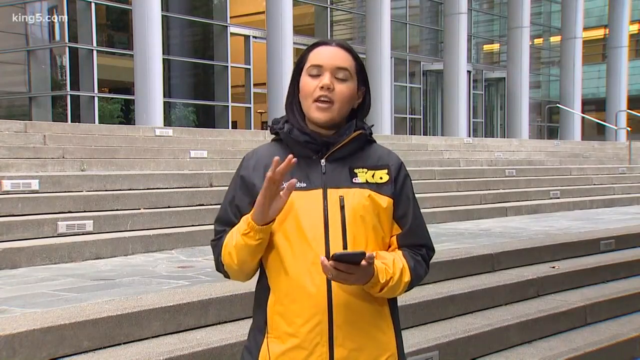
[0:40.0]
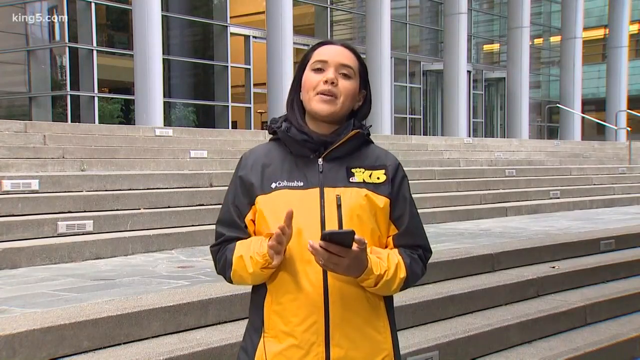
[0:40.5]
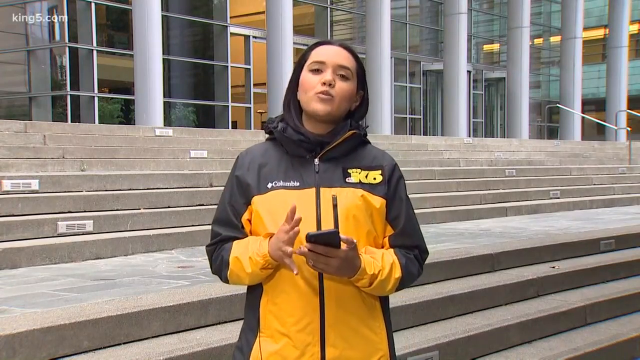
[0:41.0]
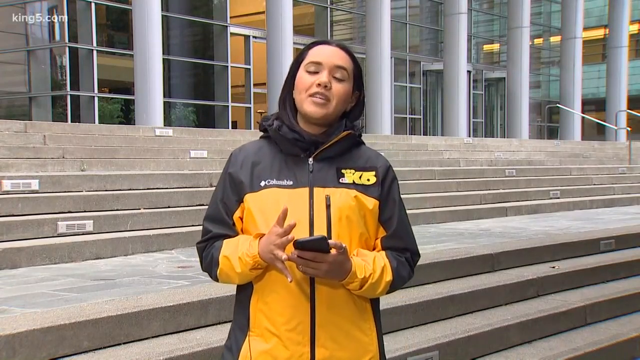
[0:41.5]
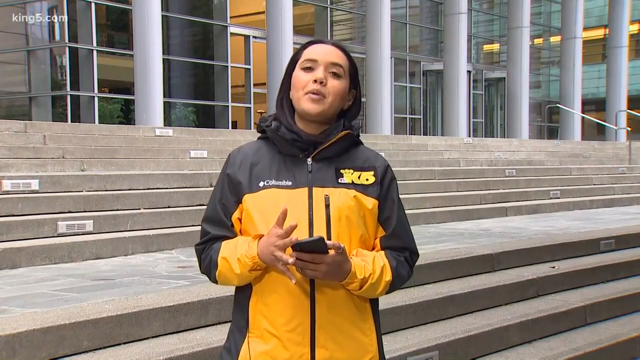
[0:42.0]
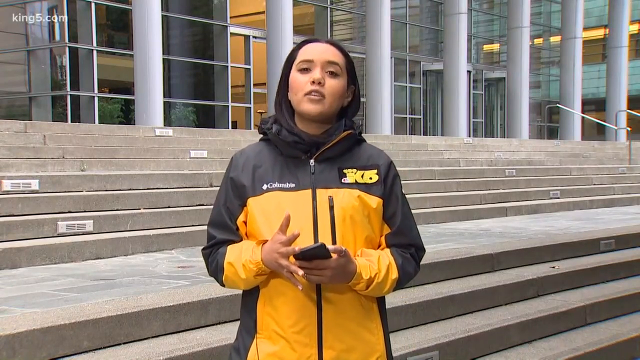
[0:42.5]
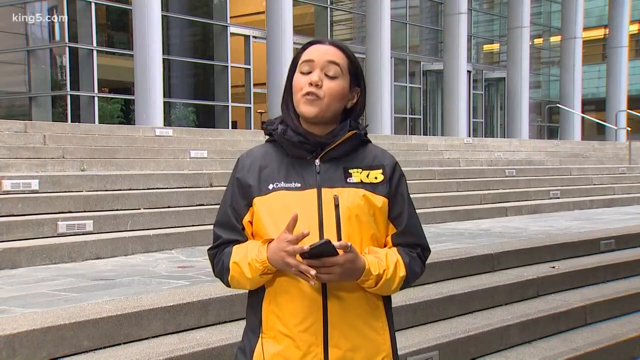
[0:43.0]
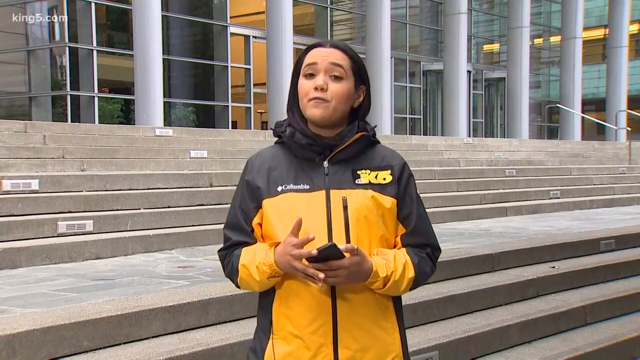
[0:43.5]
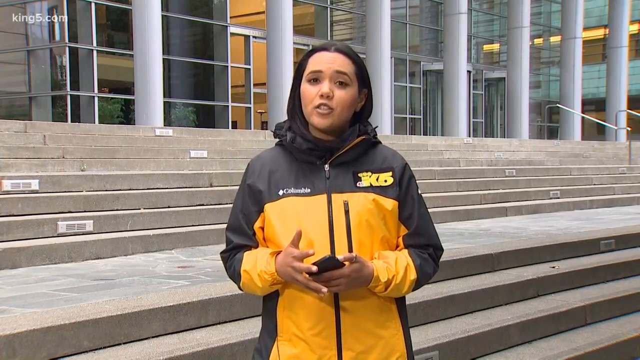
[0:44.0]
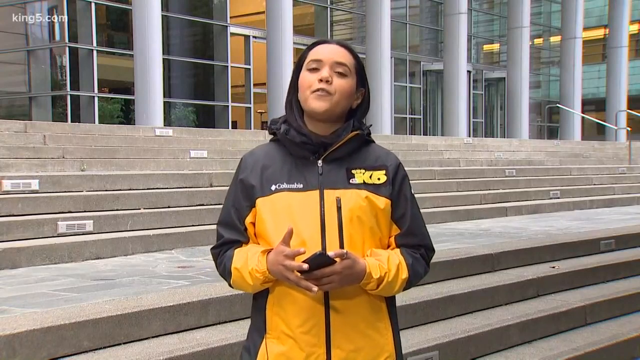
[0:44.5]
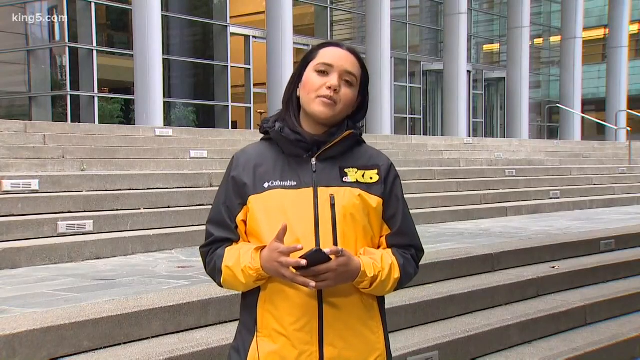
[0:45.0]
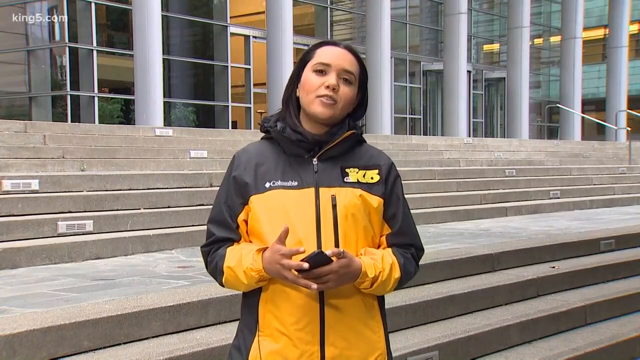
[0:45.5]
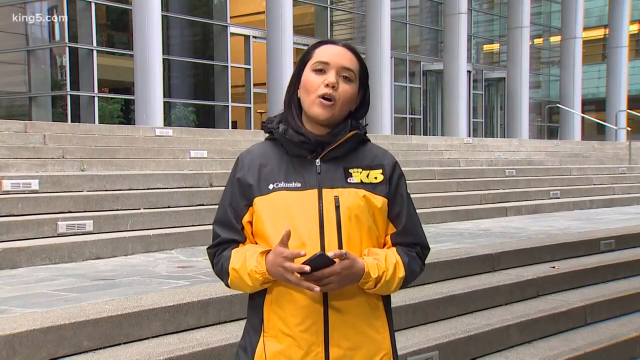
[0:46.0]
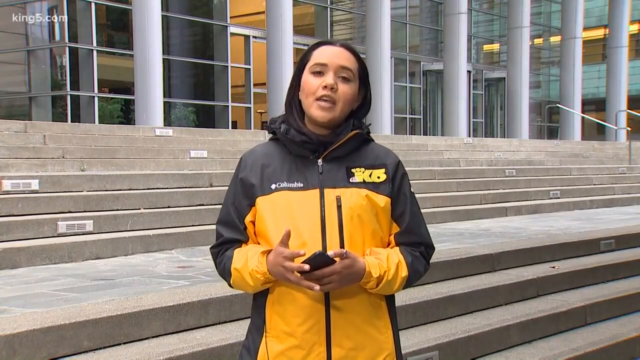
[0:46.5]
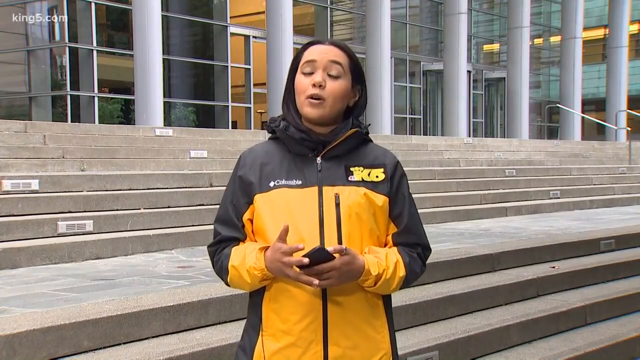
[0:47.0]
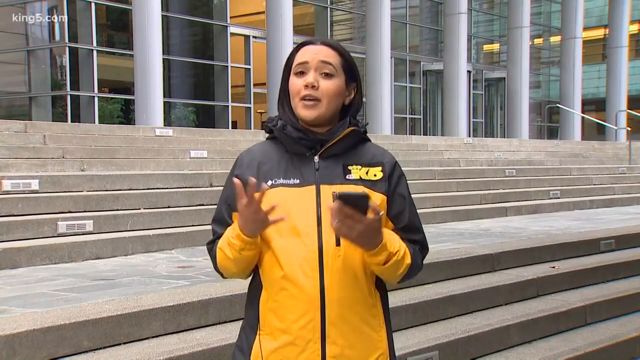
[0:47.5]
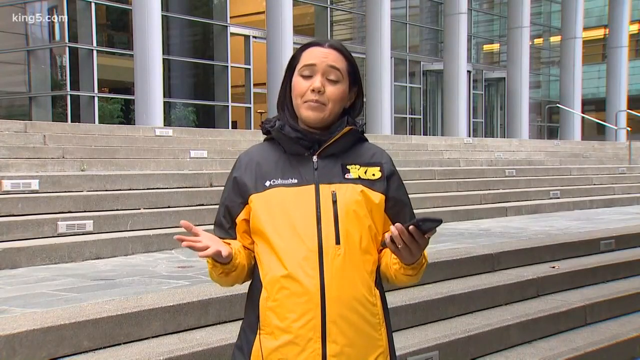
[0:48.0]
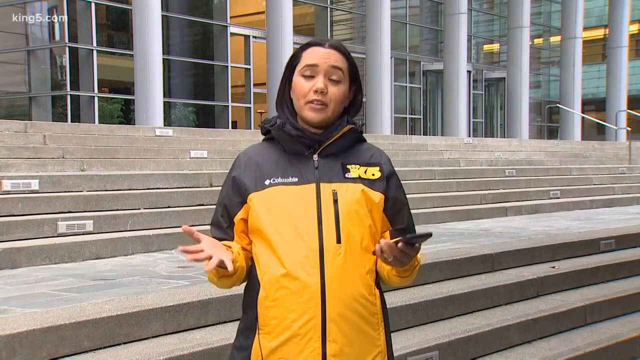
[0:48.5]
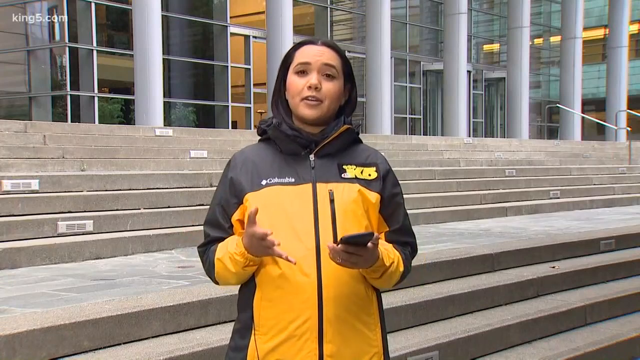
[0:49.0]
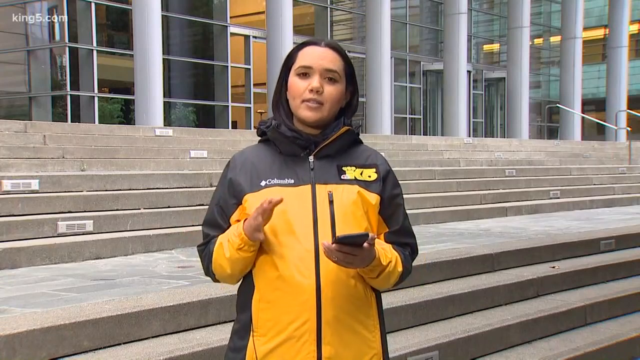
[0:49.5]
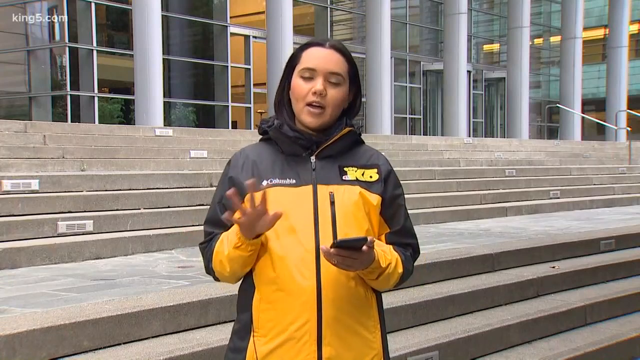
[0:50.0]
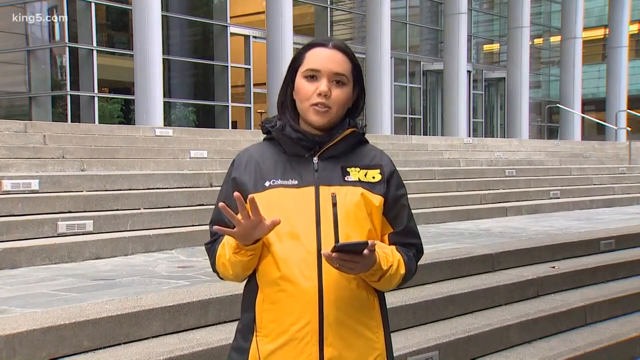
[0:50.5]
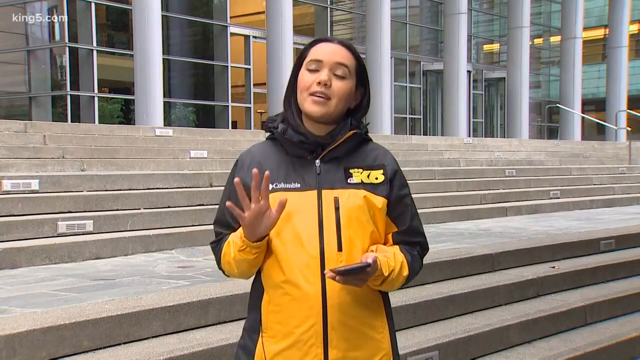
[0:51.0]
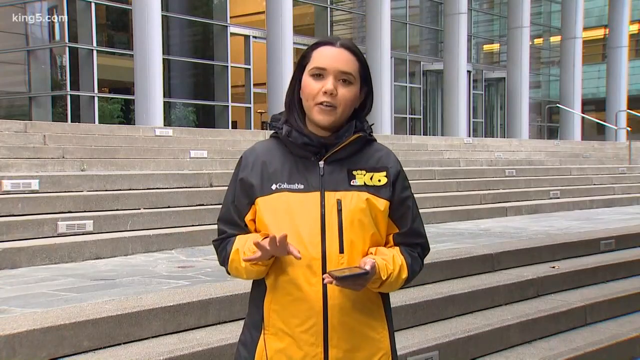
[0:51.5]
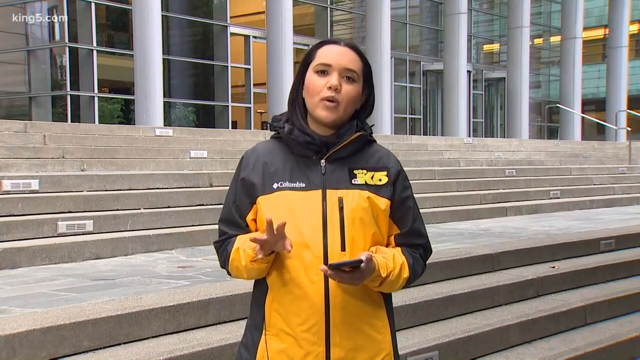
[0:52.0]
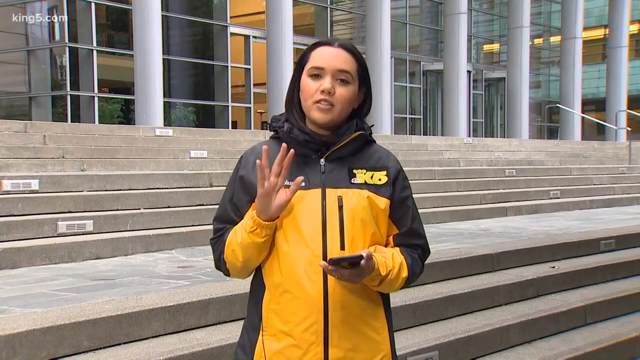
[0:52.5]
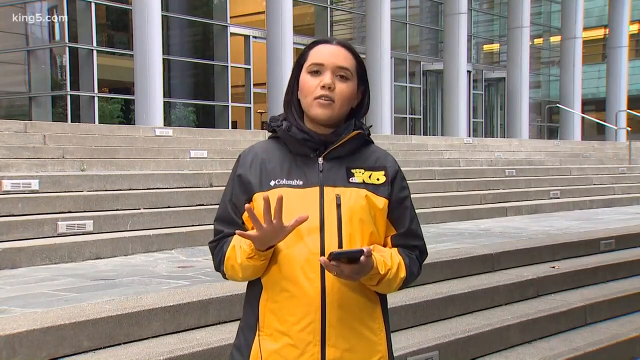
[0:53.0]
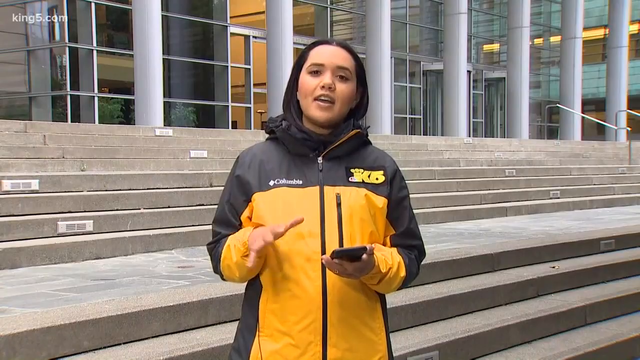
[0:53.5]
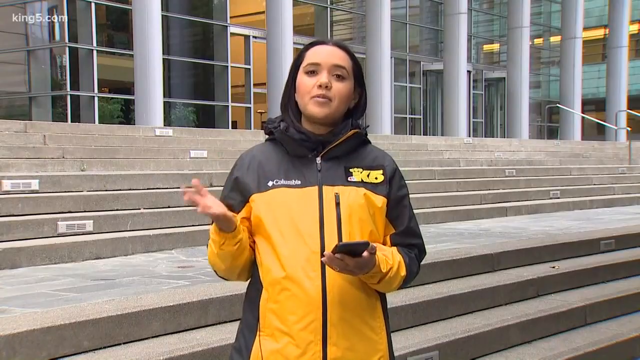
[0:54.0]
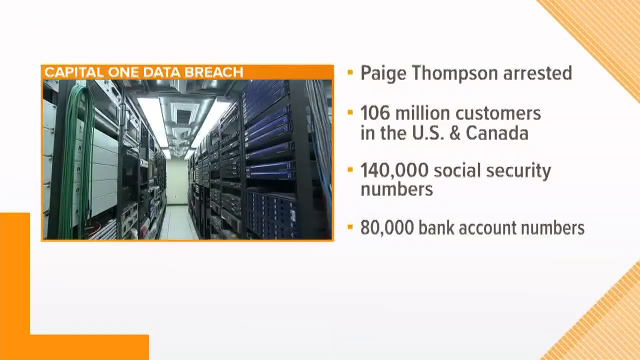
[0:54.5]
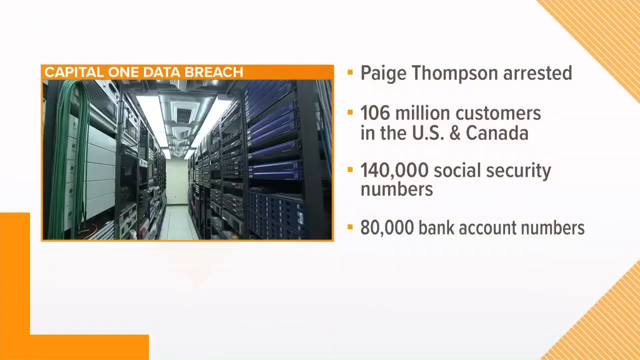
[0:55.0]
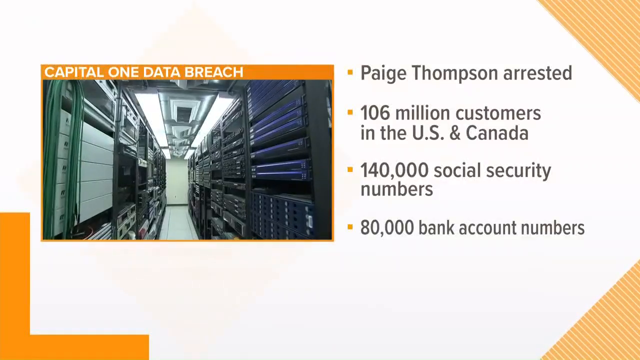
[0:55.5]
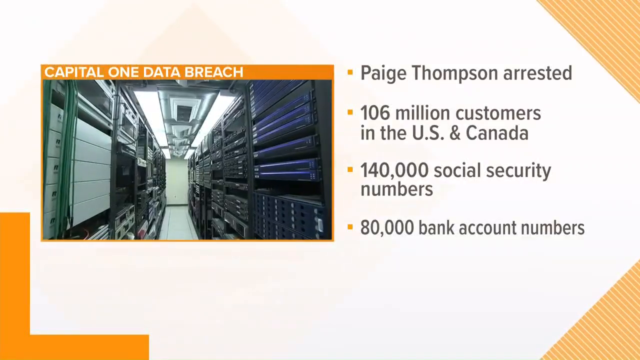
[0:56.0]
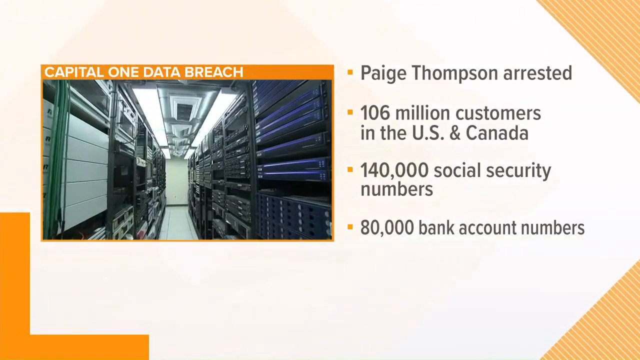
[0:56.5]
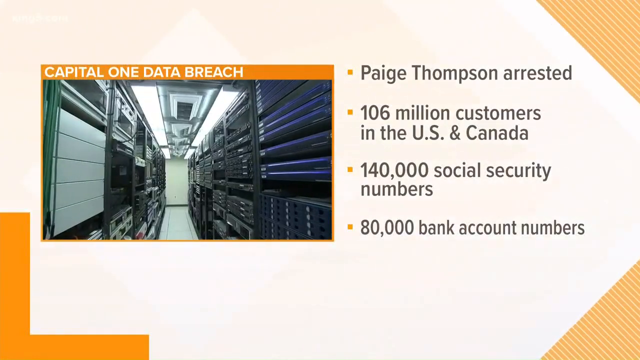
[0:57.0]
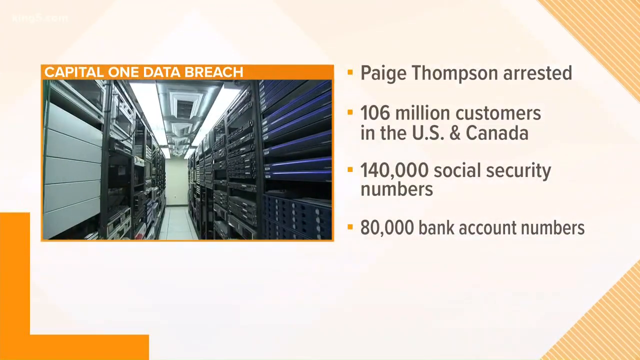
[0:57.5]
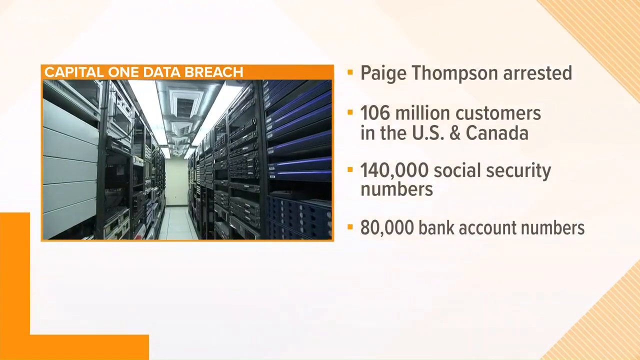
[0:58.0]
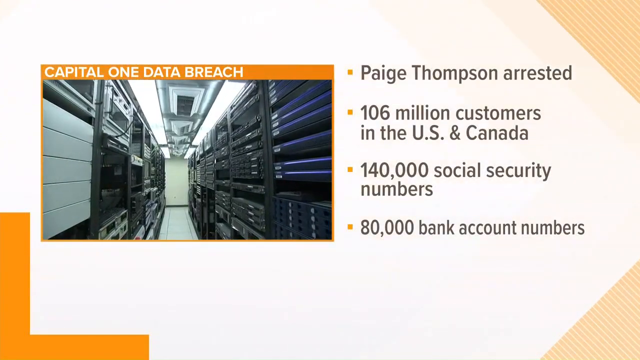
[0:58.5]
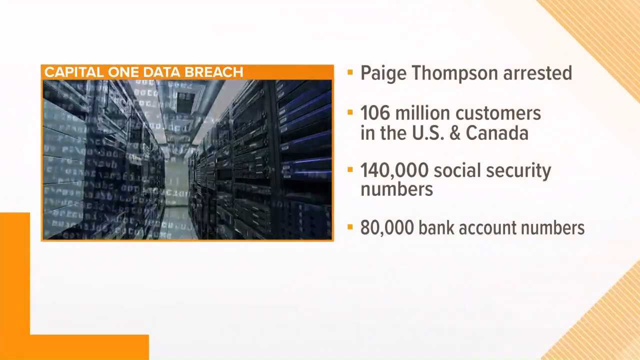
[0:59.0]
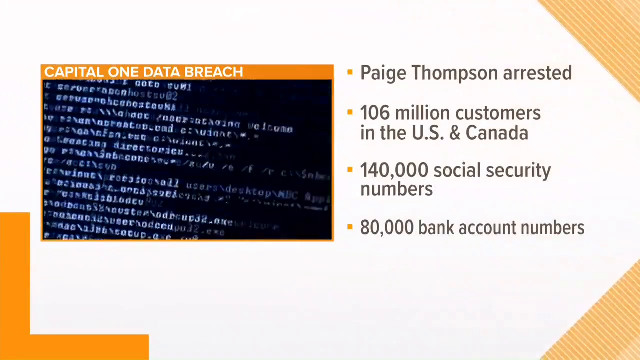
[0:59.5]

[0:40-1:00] A young woman, a TV reporter, stands at the beginning of some stairs that lead into a big building with clear windows. She wears a yellow and black Columbia jacket, has medium-length black hair and light brown skin, and is using a telephone with her left hand. As she speaks, her mouth moves and her hands make strange movements, as if signaling something. The video then cuts to a wider screen with the titles "Capital One Data Breach", "Paige Thompson Arrested", "106 Million Customers in the US and Canada", "140,000 Social Security Numbers" and "80,000 Bank Account Customers". The video then cuts to code running across the screen.